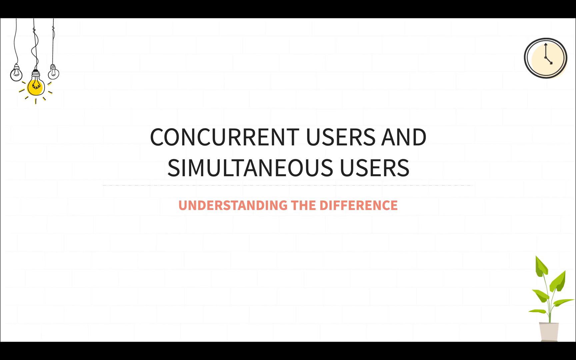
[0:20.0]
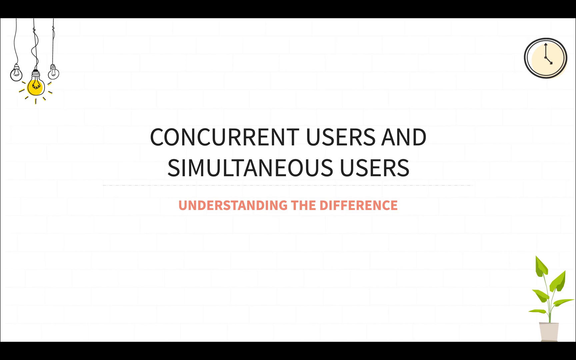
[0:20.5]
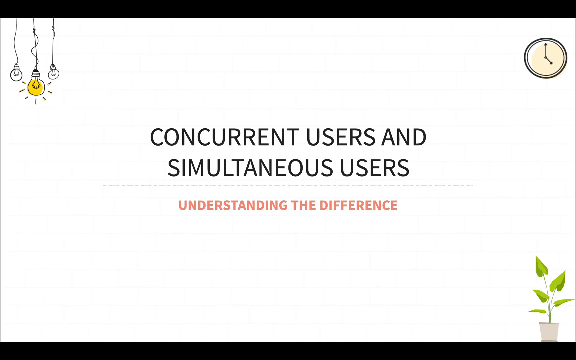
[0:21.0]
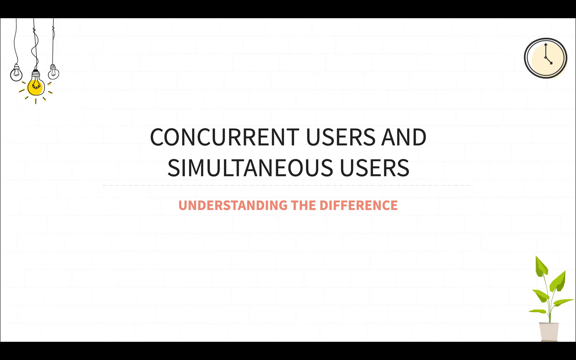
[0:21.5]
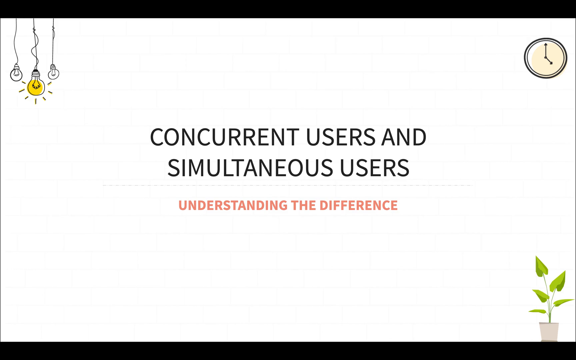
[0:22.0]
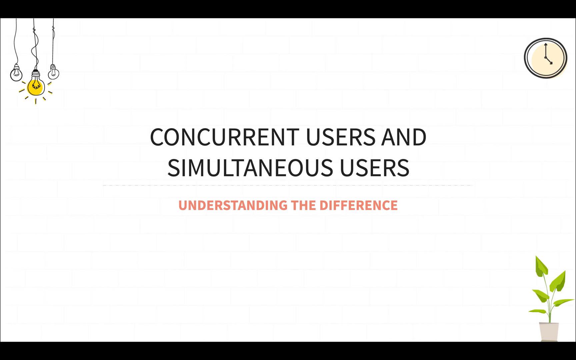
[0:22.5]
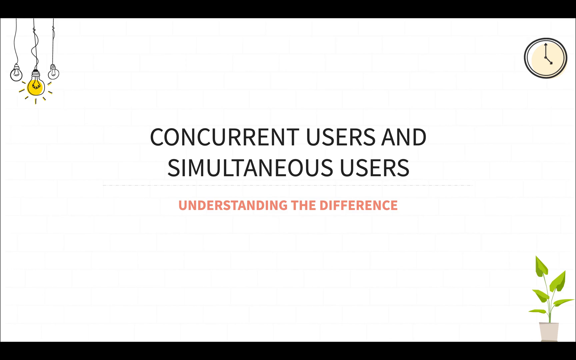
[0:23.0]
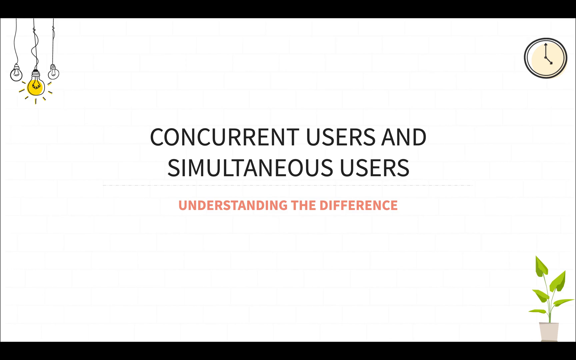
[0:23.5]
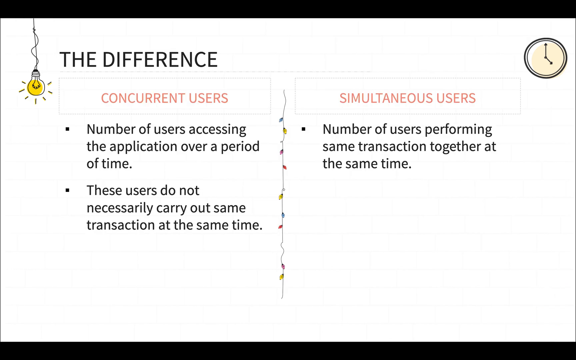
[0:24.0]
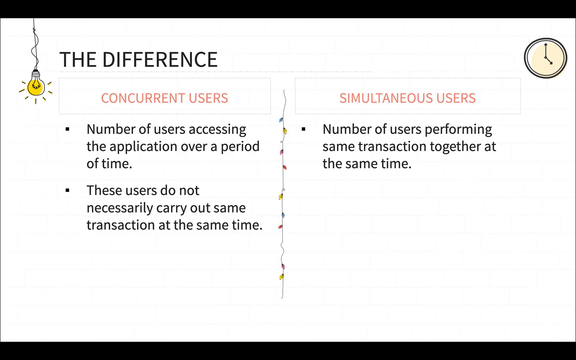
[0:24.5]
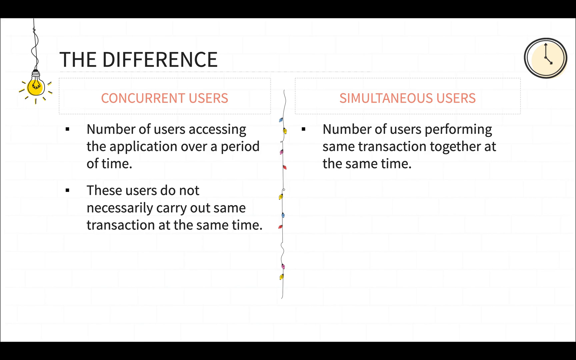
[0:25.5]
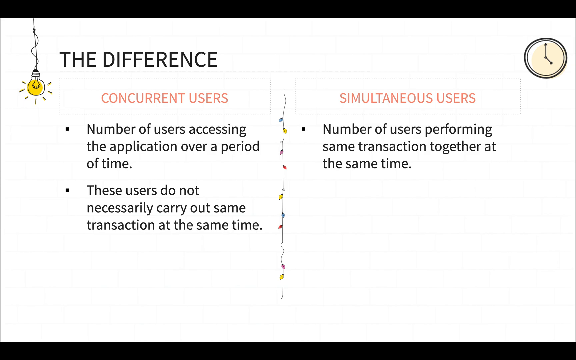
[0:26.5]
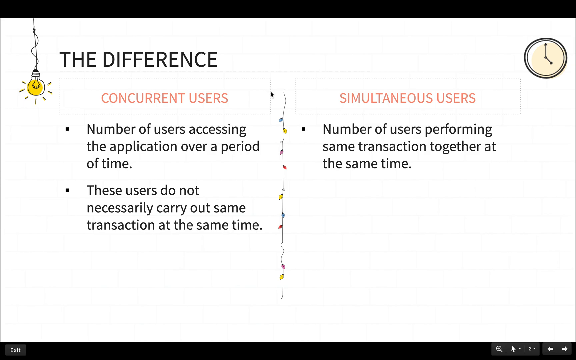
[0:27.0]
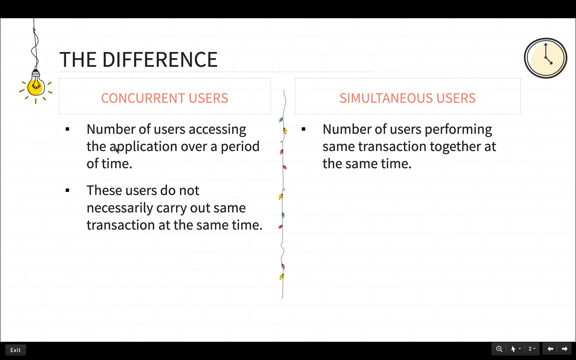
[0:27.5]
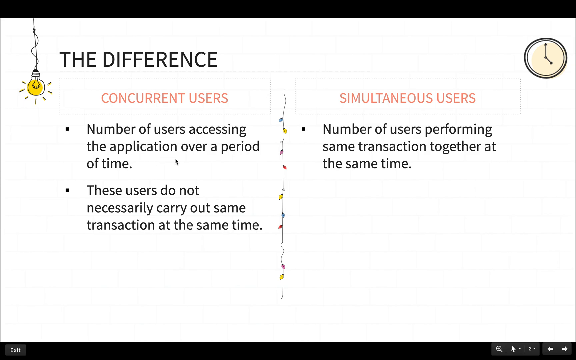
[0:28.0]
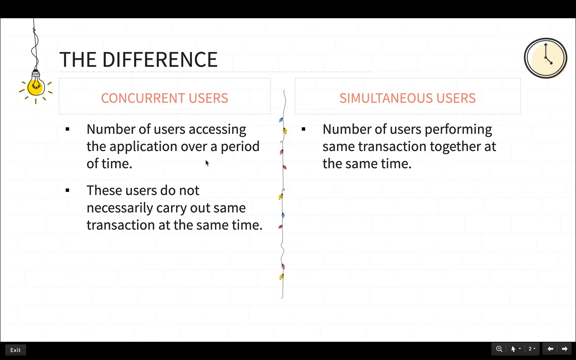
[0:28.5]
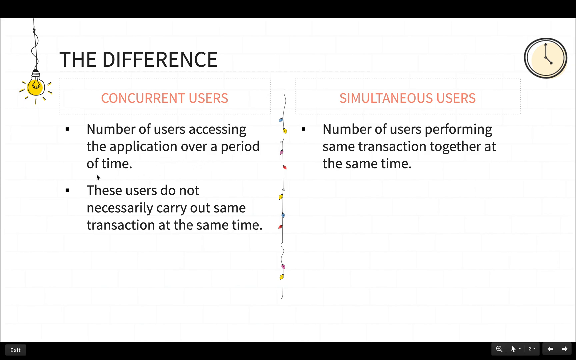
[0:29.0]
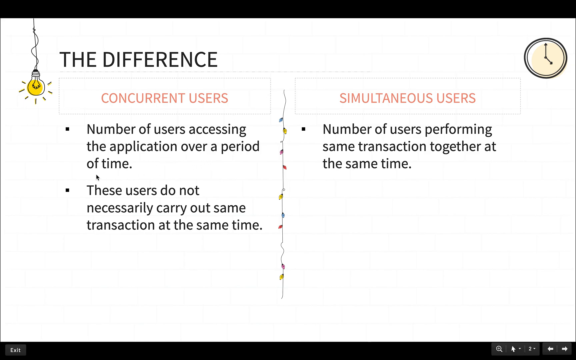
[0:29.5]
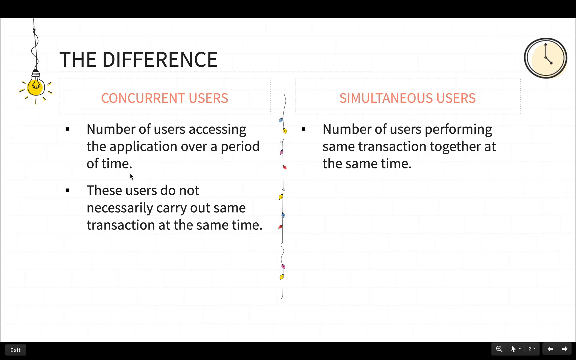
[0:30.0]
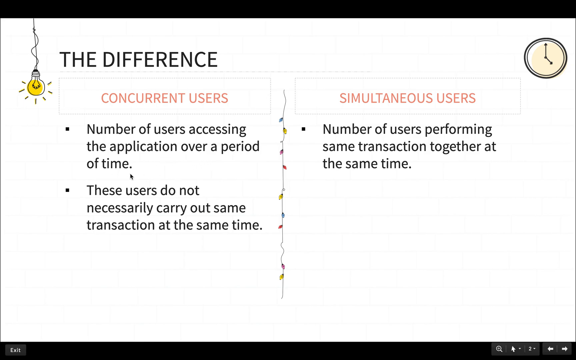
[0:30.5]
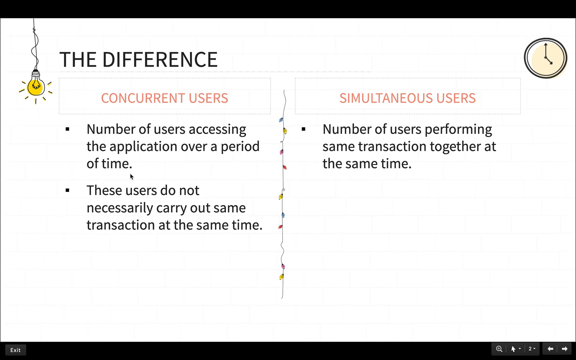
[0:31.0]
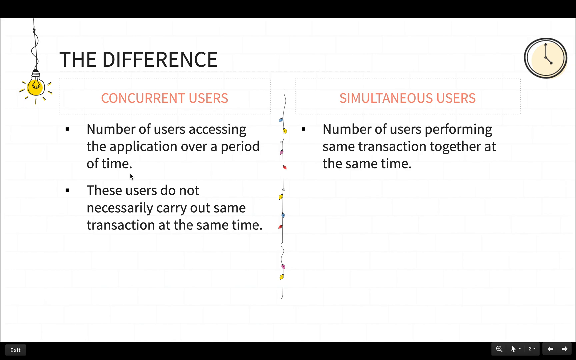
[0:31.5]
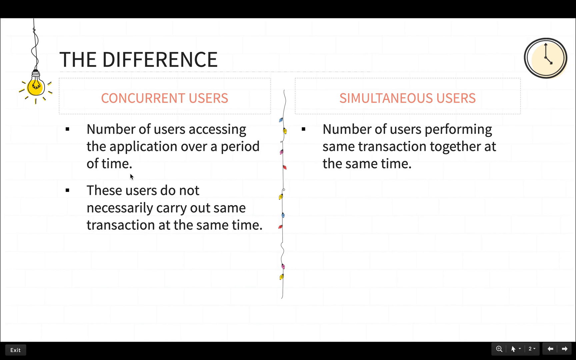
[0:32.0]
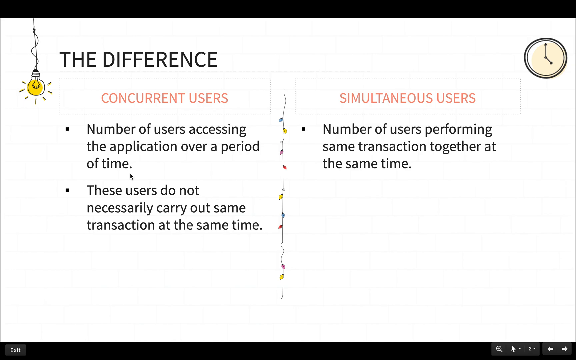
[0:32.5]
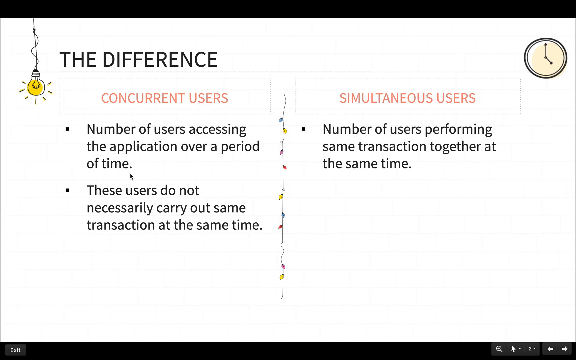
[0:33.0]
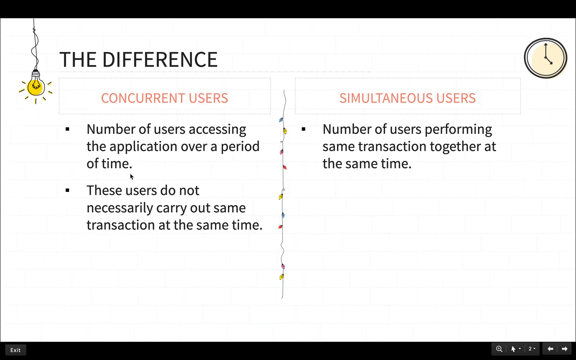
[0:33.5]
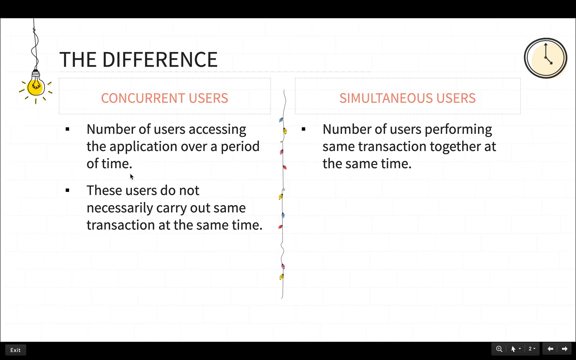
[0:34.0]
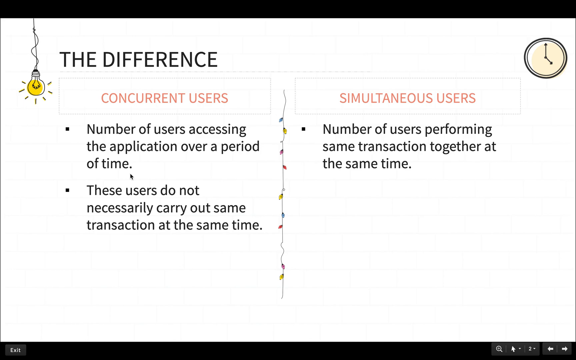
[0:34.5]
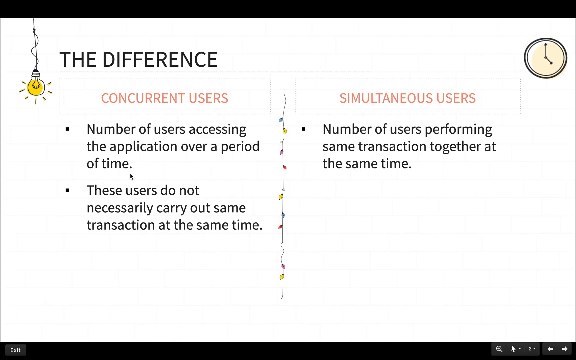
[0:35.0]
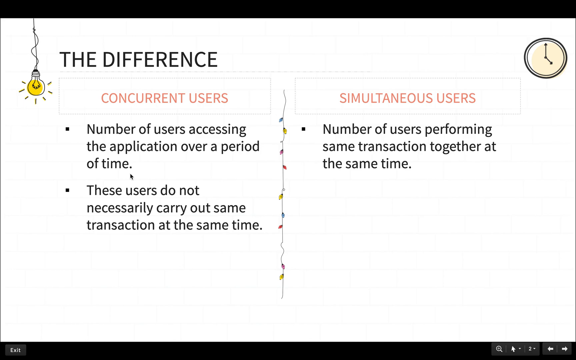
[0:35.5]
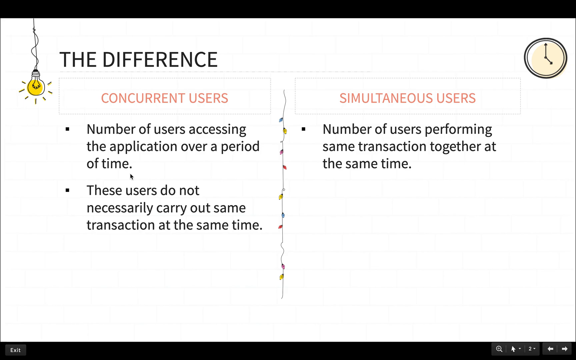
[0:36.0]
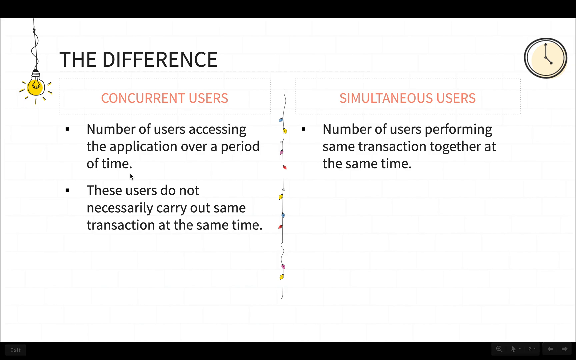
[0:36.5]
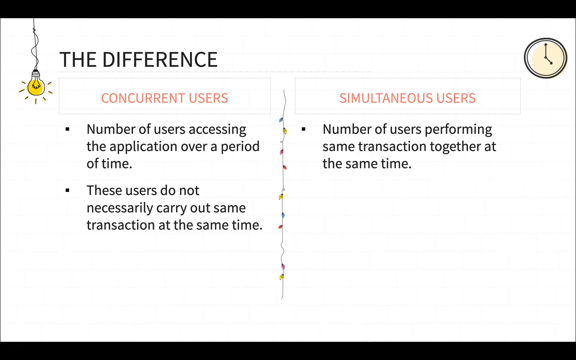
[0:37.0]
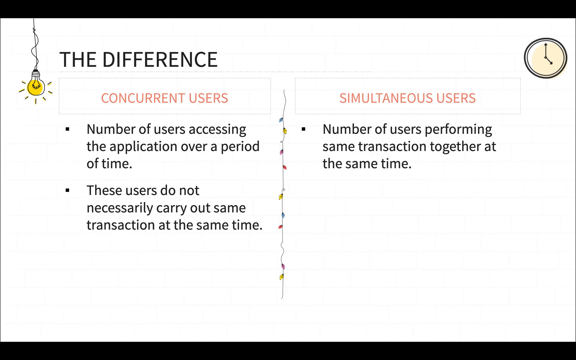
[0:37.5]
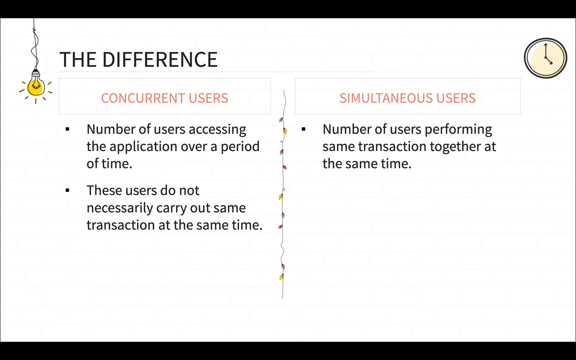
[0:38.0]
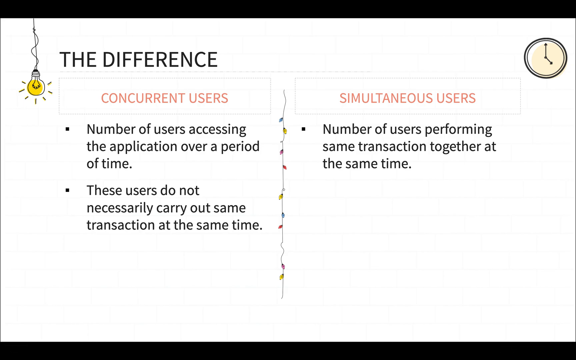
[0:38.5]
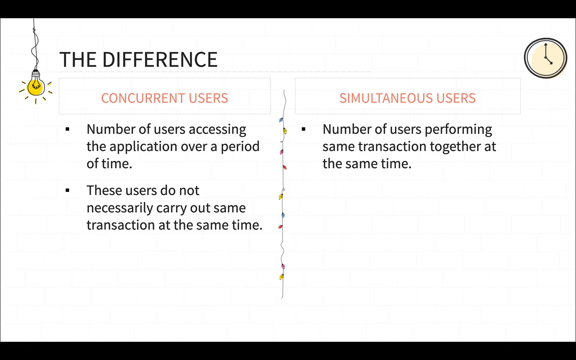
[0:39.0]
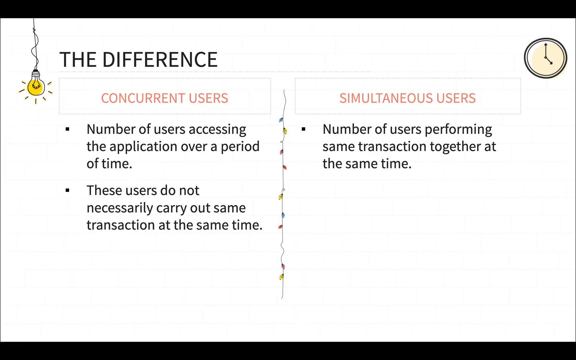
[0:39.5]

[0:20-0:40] A white slide with a black border shows the heading "concurrent users" with bullet points: "number of users accessing the application over a period of time" and "these users do not necessarily carry out the same transaction at the same time." Between the concurrent users and simultaneous users sections there is something like a dangling vine. Under "simultaneous users" it reads "number of users performing the same transaction together at the same time," and nothing else appears. In the top right-hand corner, a dangling light bulb is lit with little rays coming out of it. On the right-hand side is a clock with a kind of light yellow face and no numbers; its time is somewhere between four and five o'clock.